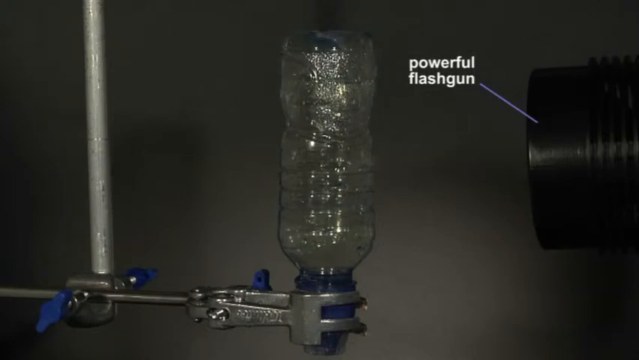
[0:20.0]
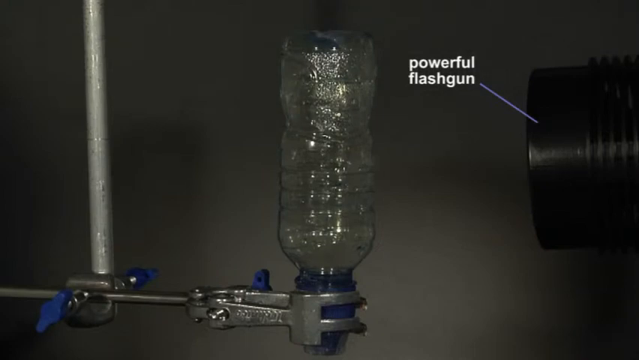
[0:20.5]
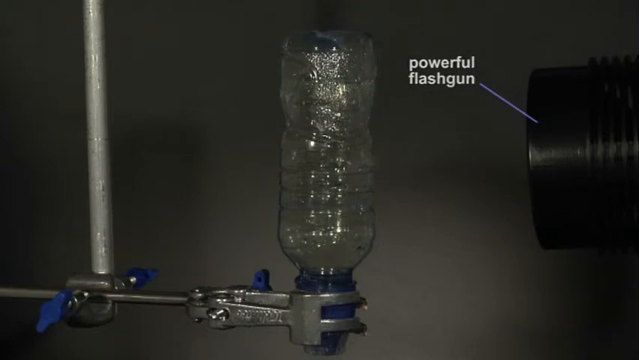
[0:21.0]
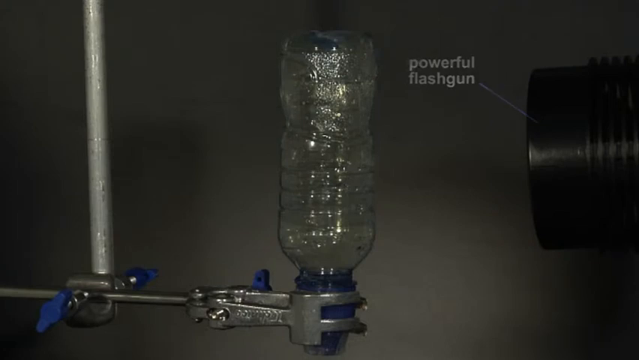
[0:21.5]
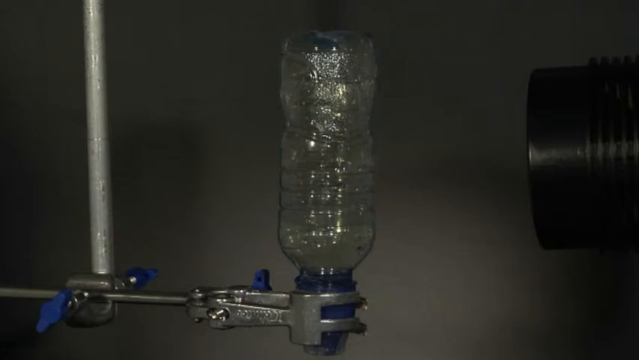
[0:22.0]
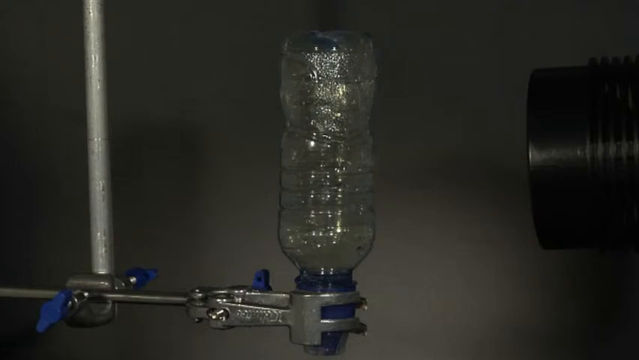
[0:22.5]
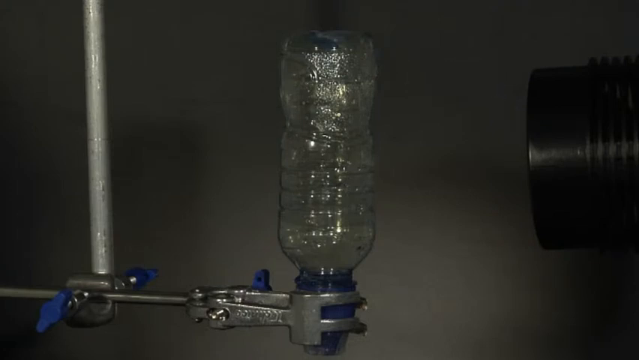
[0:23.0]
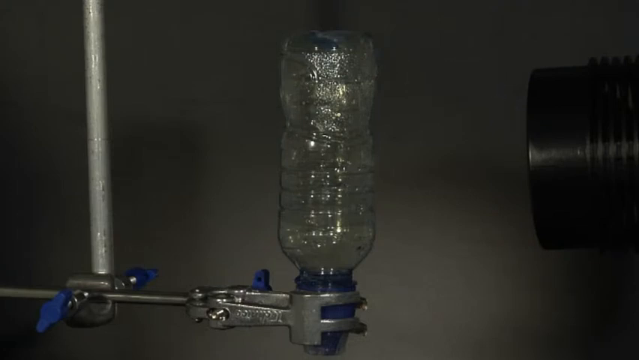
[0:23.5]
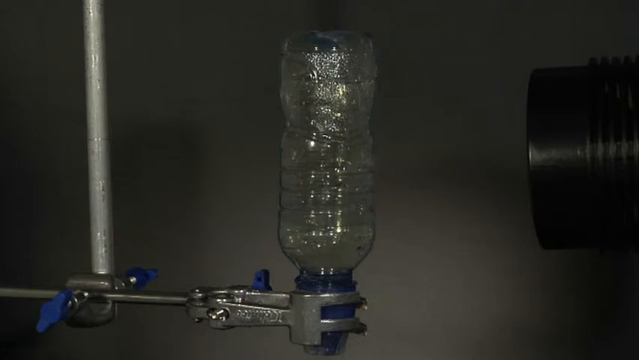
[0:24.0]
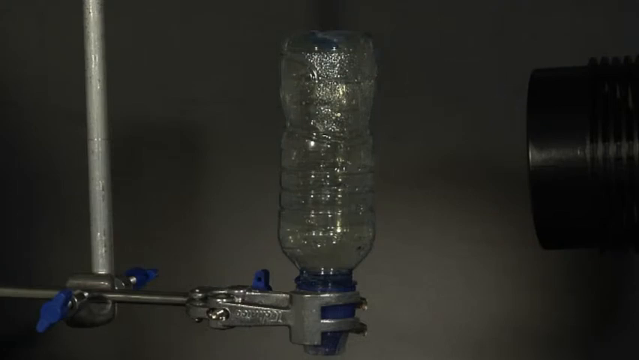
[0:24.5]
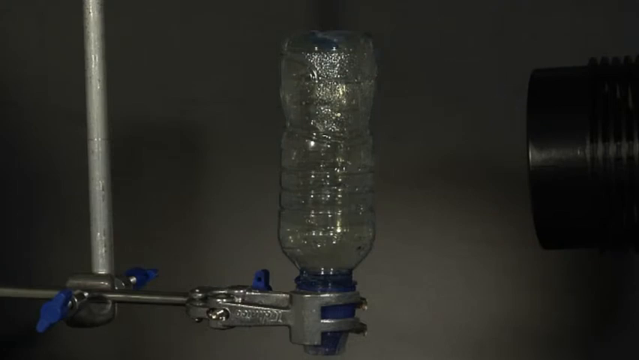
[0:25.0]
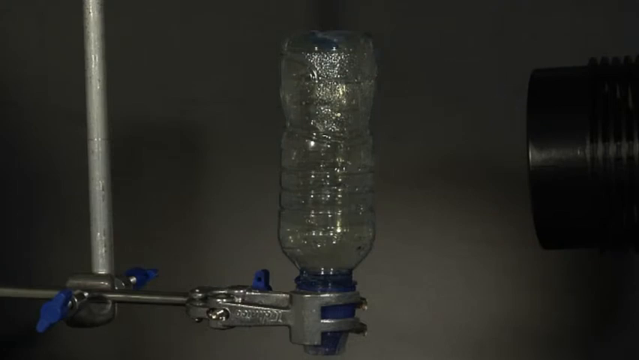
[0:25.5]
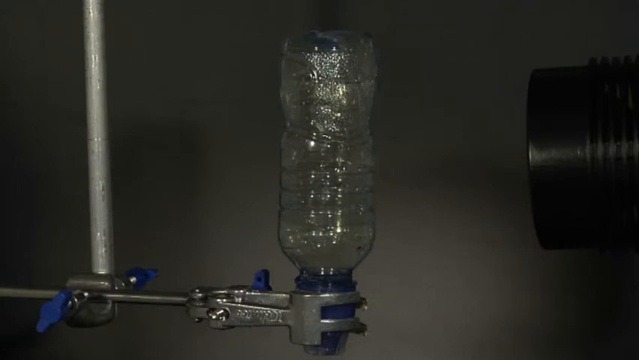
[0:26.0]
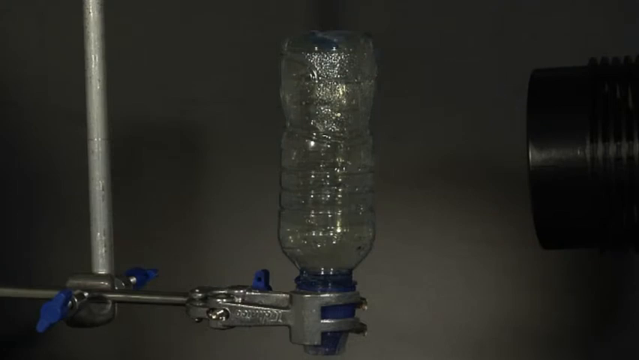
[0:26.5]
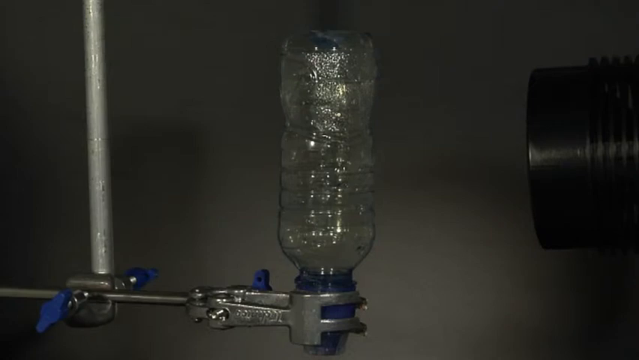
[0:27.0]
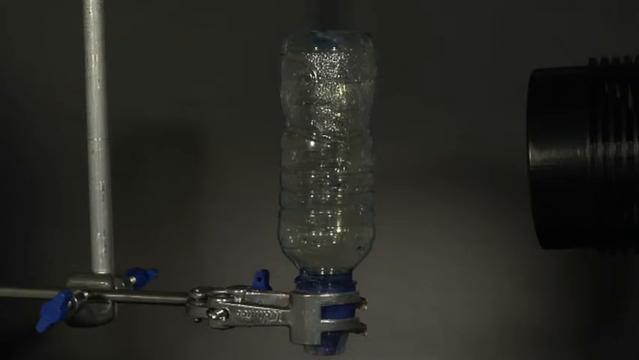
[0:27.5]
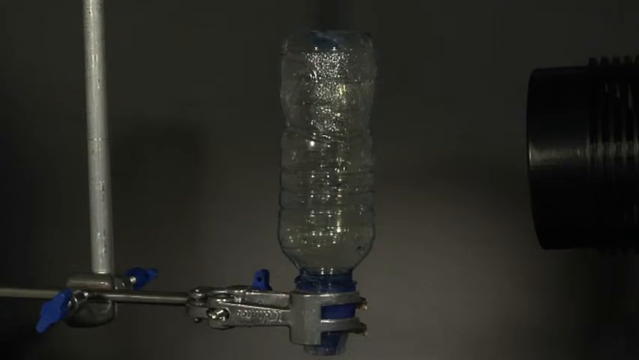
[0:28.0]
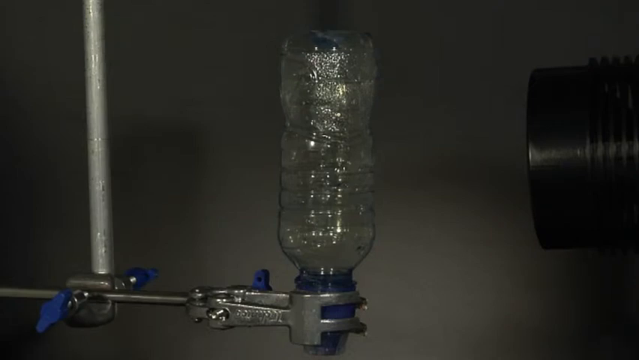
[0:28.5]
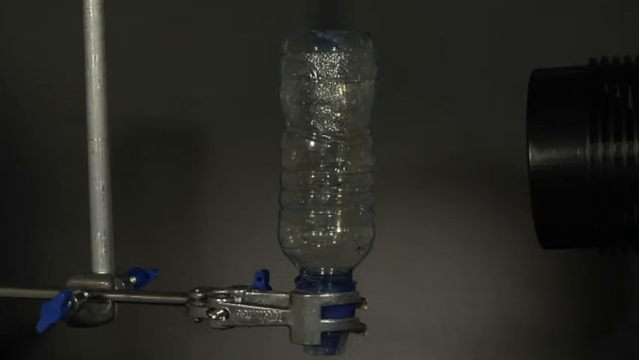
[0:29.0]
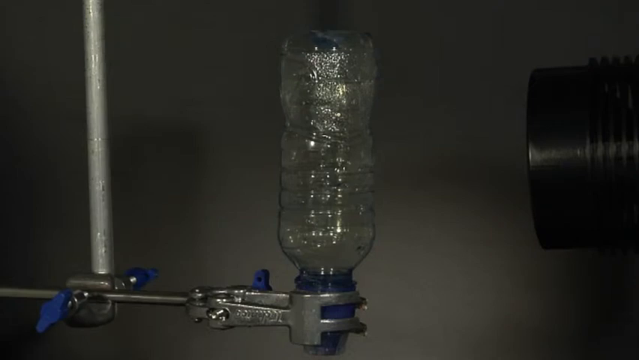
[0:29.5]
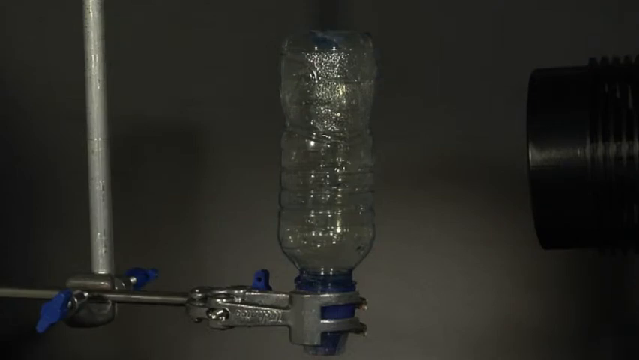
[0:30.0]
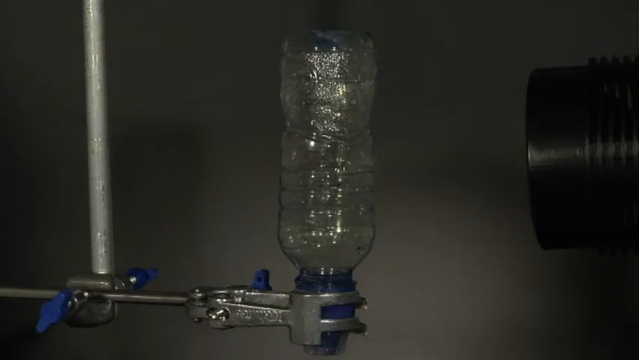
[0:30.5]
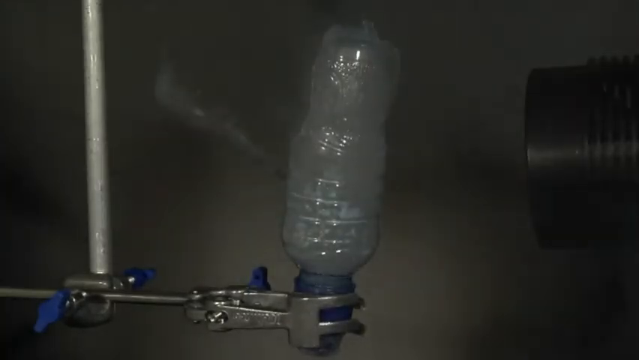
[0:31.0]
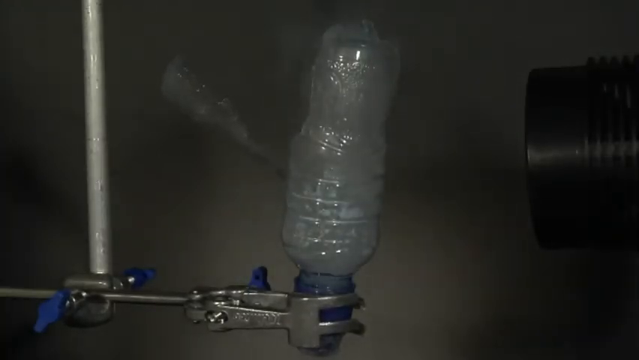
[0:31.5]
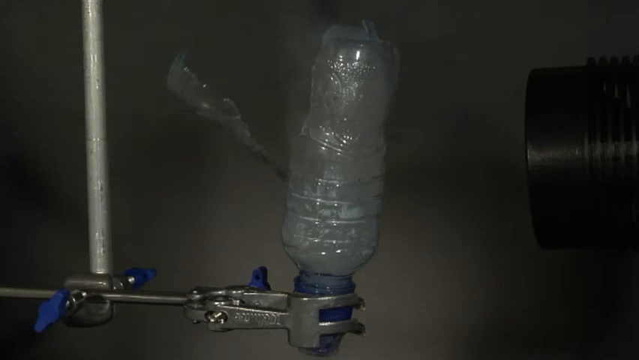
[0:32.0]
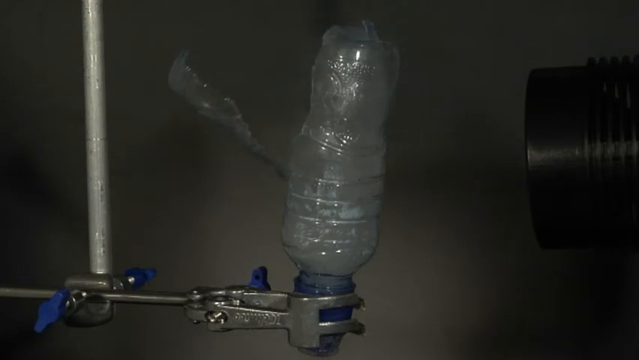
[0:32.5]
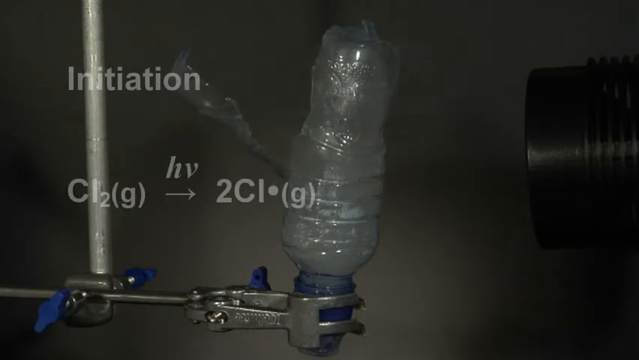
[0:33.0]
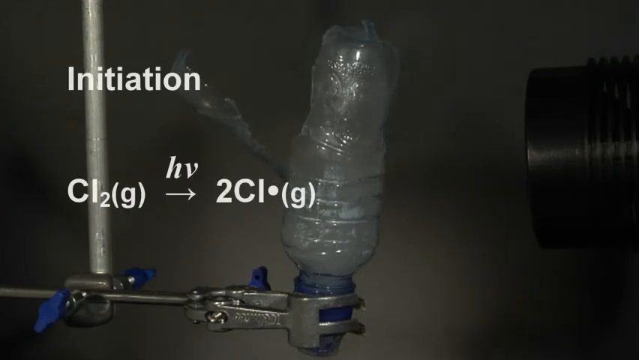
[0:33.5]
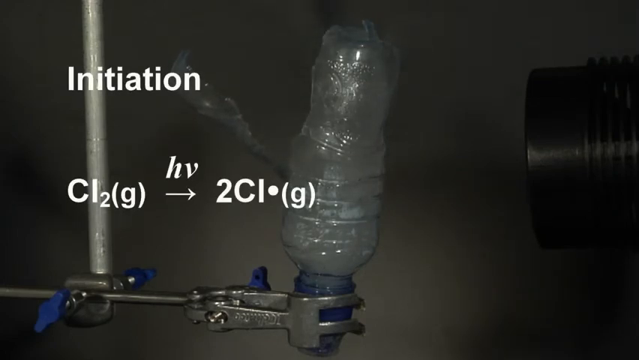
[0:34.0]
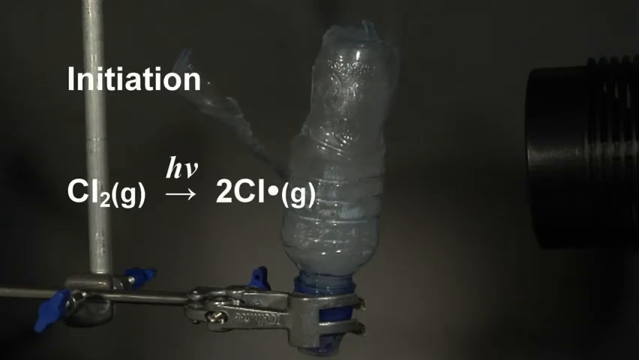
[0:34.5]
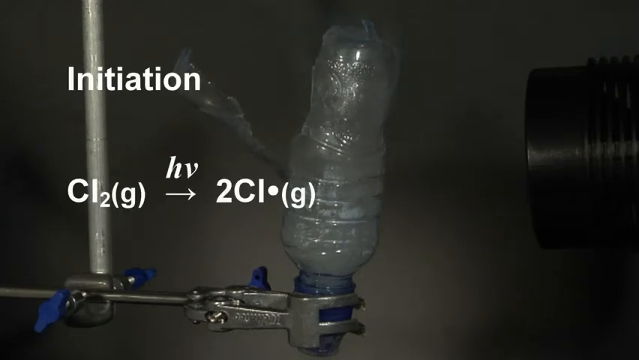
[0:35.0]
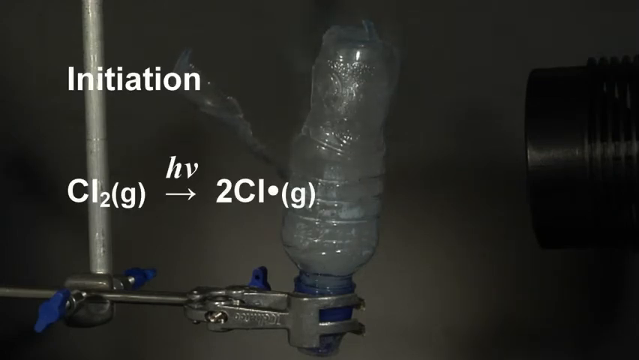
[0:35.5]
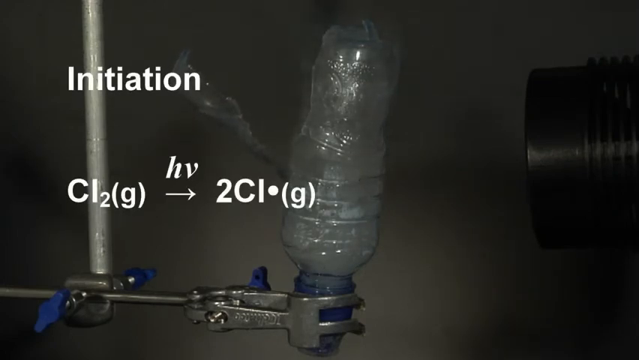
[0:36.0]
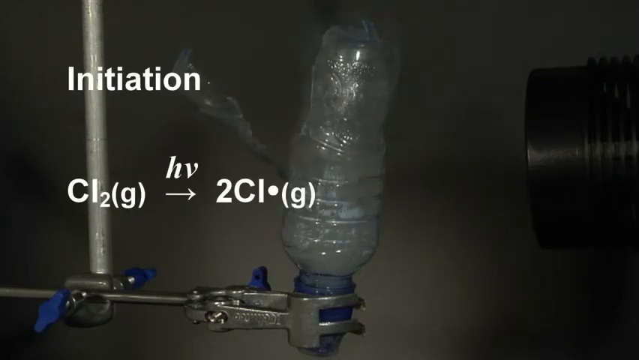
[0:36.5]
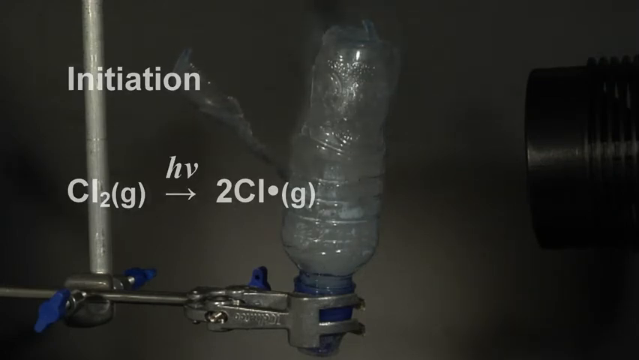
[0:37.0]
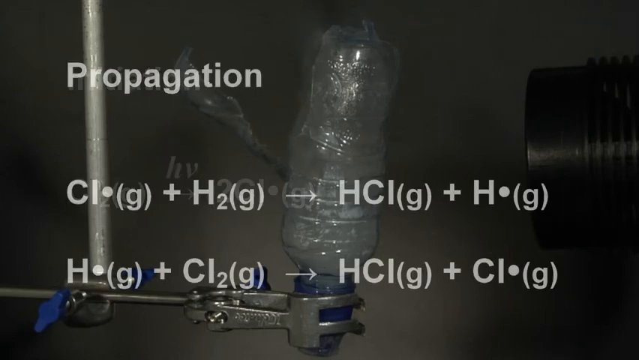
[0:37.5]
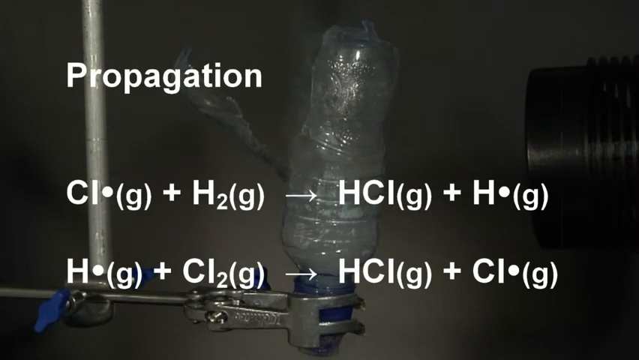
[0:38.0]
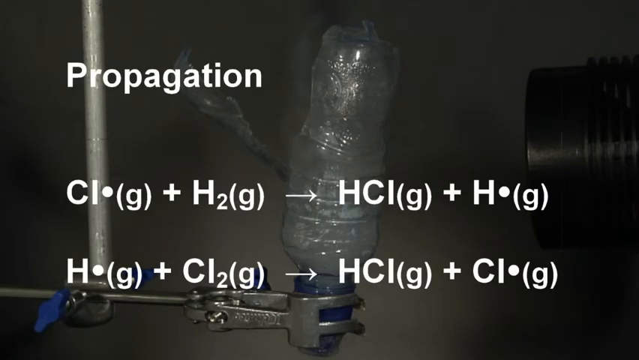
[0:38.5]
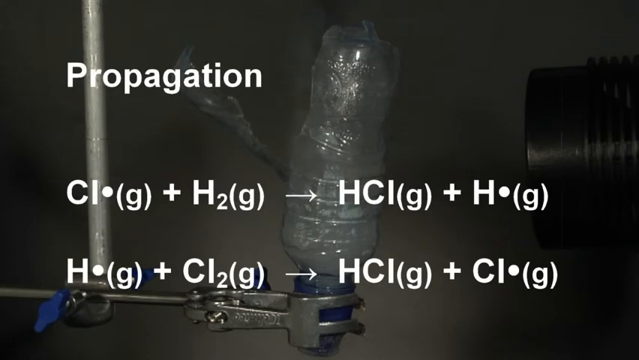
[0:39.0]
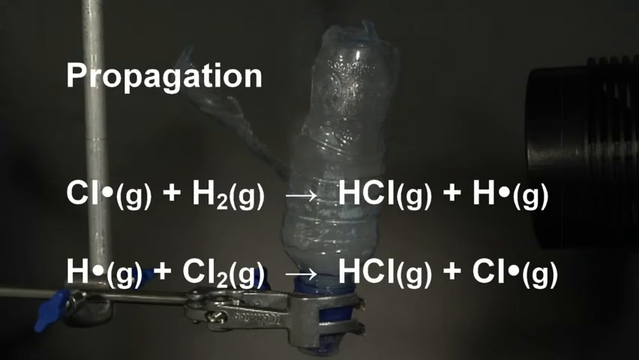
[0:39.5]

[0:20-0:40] An upside-down water bottle, with no visible contents, is held by some type of little machine grip. Next to it is a big black object labeled "powerful flash gun." For a while nothing changes. Then there is a big explosion-like flash from the flash gun, and the water bottle kind of explodes, with a piece of it completely taken off and left hanging off the bottle. Smoke comes from it. Text reads "initiation" with a formula beneath it, followed by "propagation" with two formulas, apparently scientific formulas.